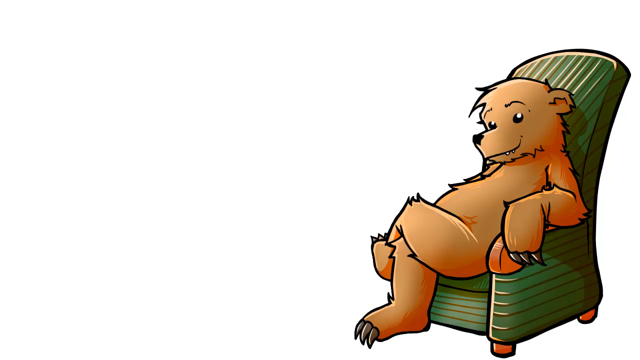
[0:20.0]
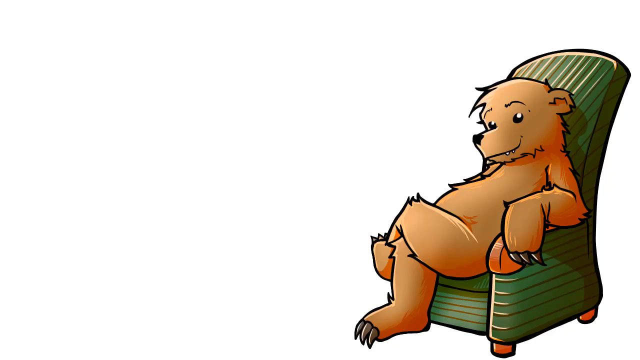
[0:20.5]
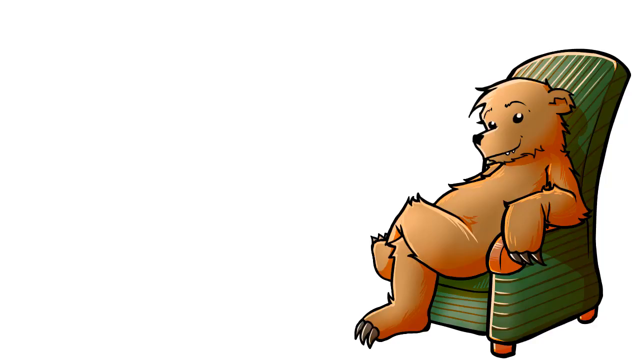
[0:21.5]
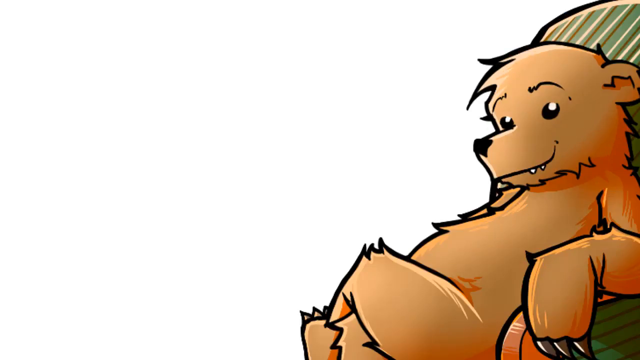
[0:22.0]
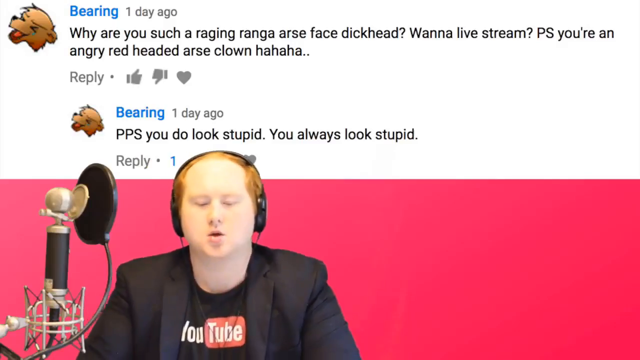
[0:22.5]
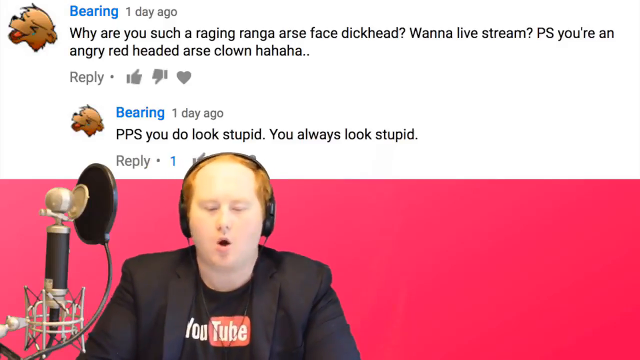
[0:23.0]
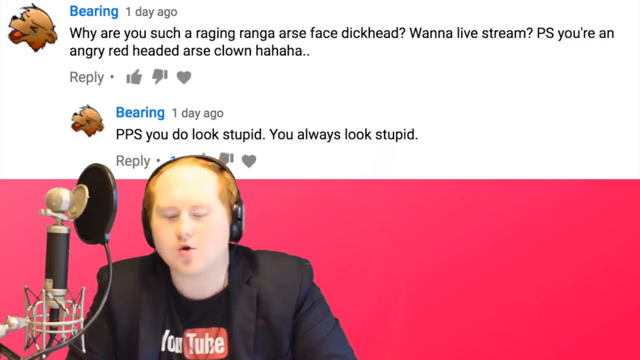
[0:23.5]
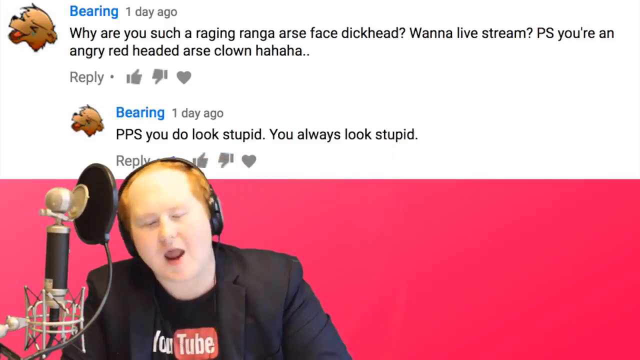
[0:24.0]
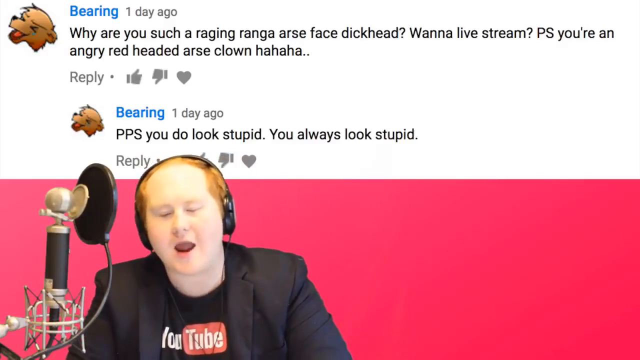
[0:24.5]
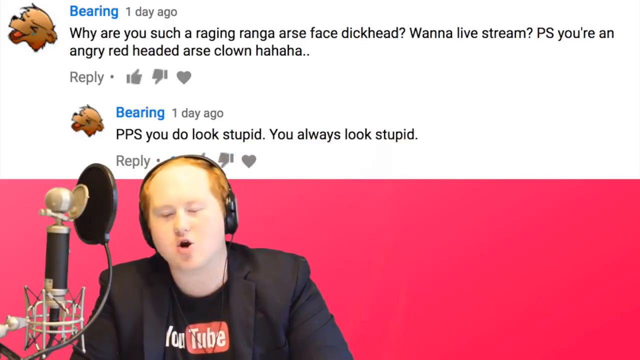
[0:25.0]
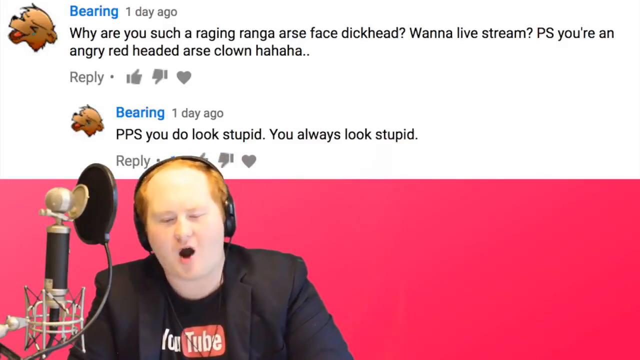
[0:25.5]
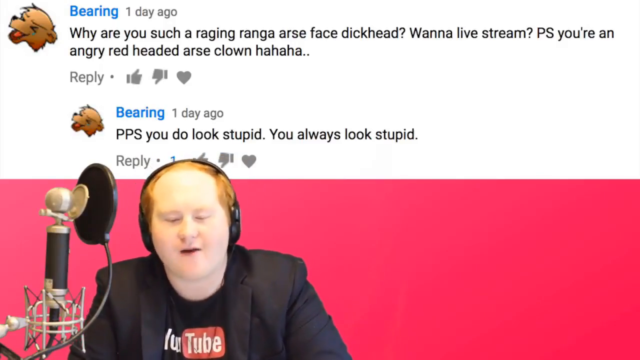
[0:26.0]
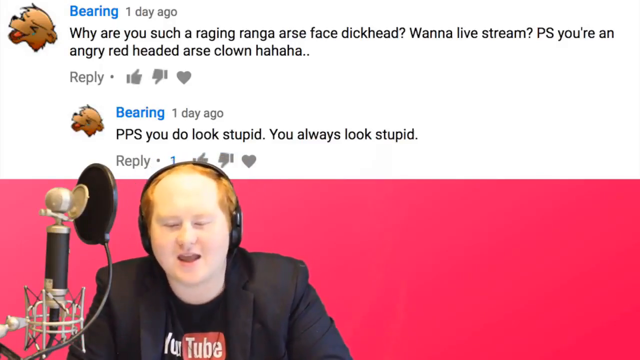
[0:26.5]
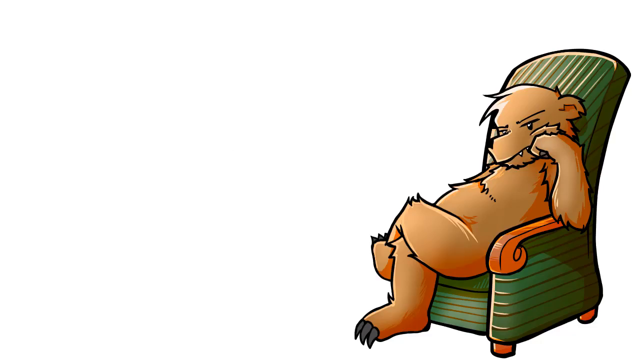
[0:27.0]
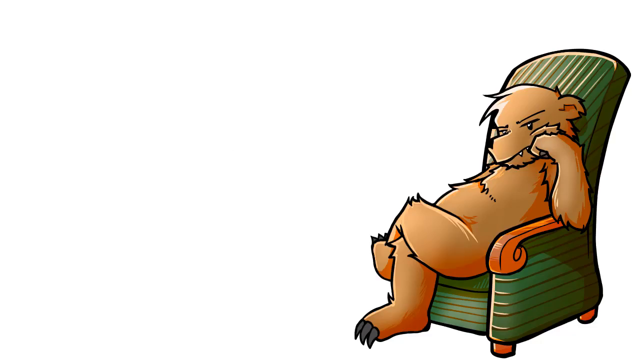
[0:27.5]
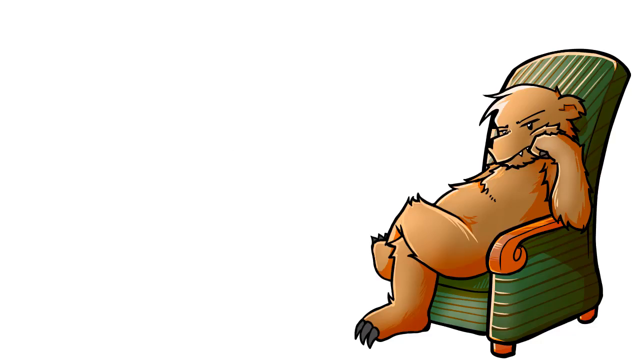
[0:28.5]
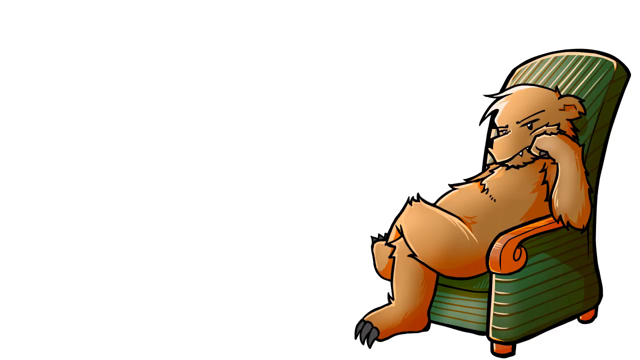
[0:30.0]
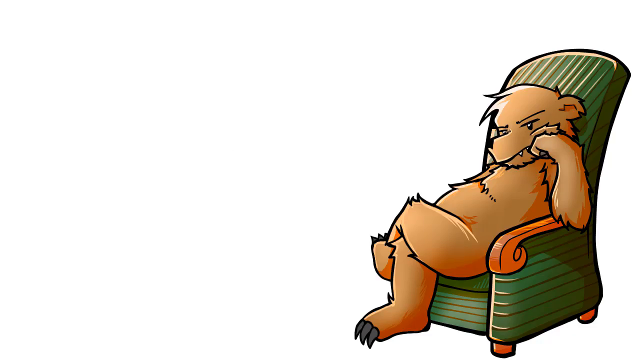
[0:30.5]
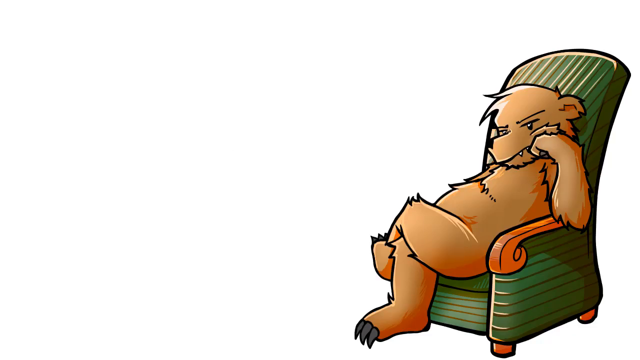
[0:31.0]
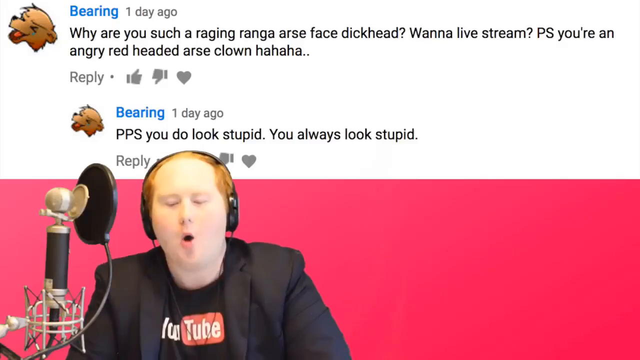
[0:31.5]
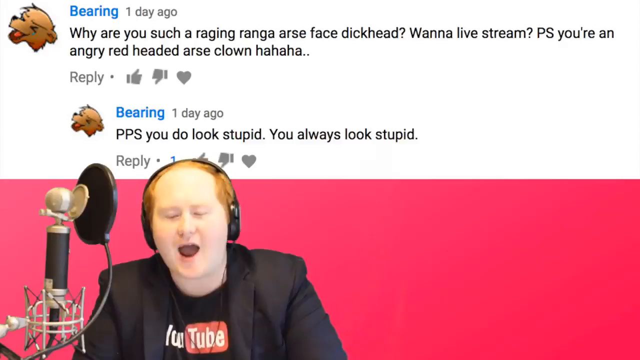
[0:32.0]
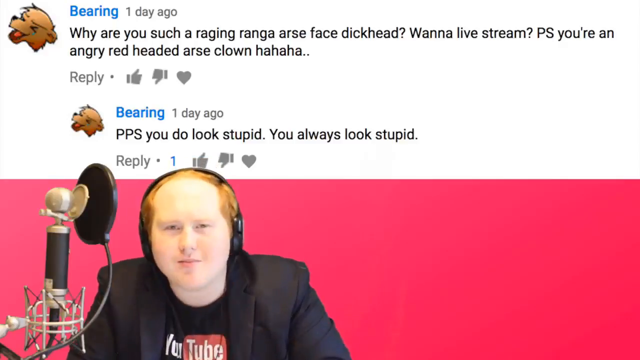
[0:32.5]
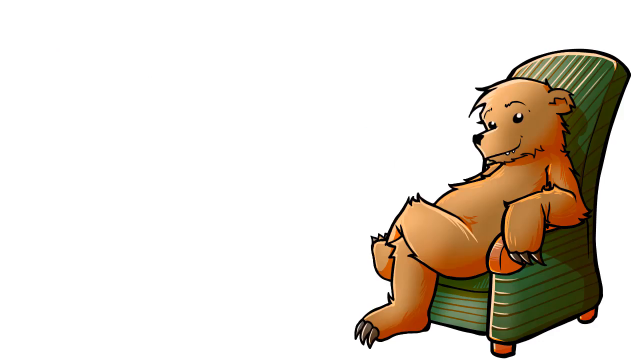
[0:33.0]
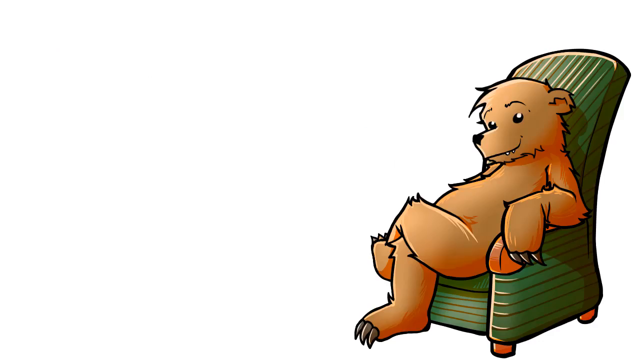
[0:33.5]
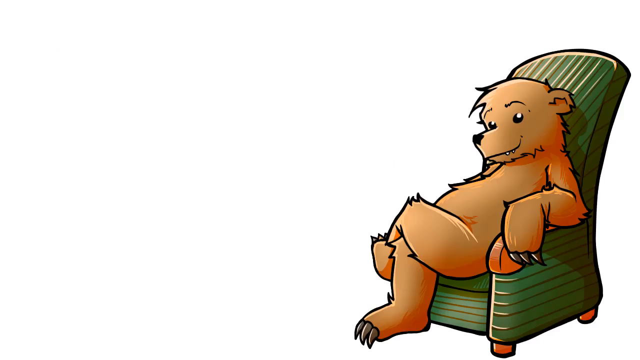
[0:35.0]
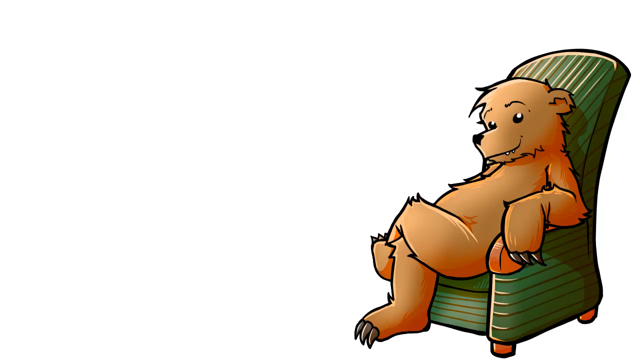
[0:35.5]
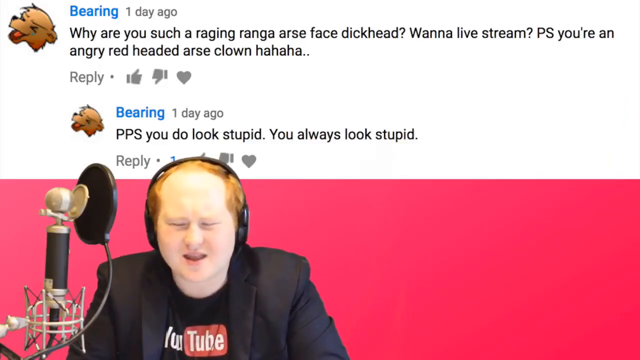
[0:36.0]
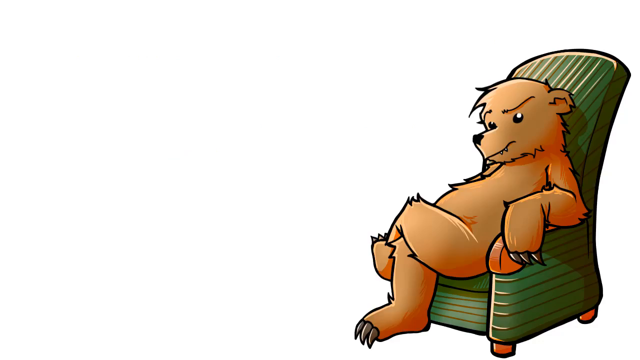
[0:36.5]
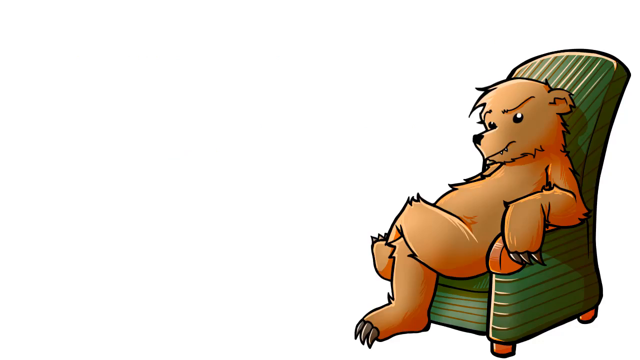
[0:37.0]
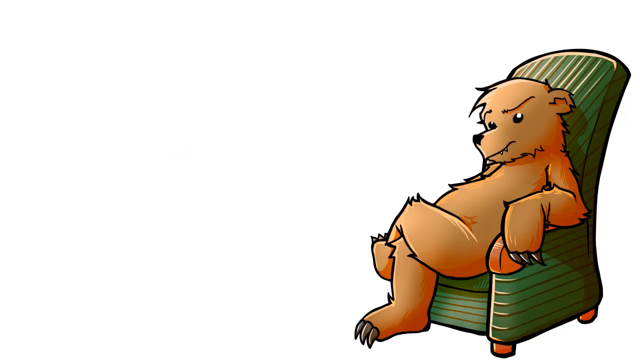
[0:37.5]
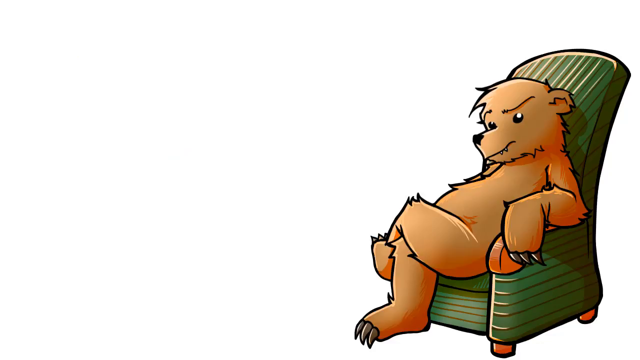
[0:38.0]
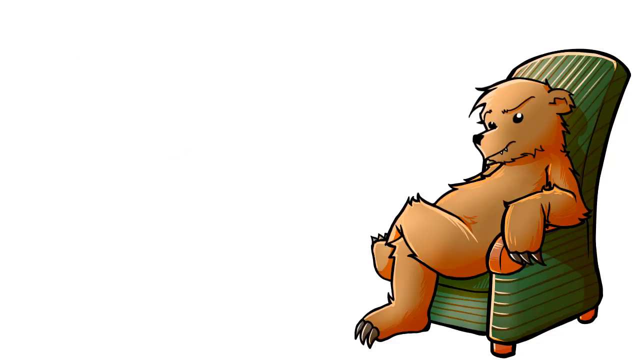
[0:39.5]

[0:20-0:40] A cartoon image of a bear sitting in a green recliner appears on a completely white background. The bear has a slight smile, and its posture is very human-like: its left leg rests over its right, and its left paw rests on the armrest. The armrest is a medium brown color, perhaps simulating wood, and the chair has lines of texture representing a cloth covering. The video transitions to the speaker, who, as the text behind him shows, is responding to someone going by the call sign "BEARING". The comments all appear to be very critical of the speaker. He is very angry and responds in a loud manner. The video returns to the bear in the recliner, now no longer smiling: its left arm rests on the armrest, its left paw closed and supporting the side of its face, and it doesn't appear very amused. The video cuts back and forth between the speaker and the cartoon bear, which shifts through a variety of poses, from seeming a bit content sitting in the chair, to resting its cheek against its left paw, to a look of discomfort.